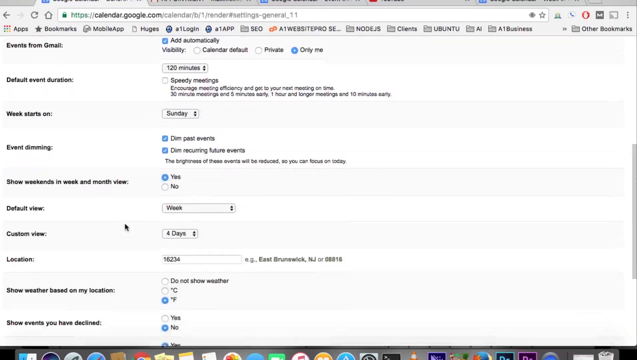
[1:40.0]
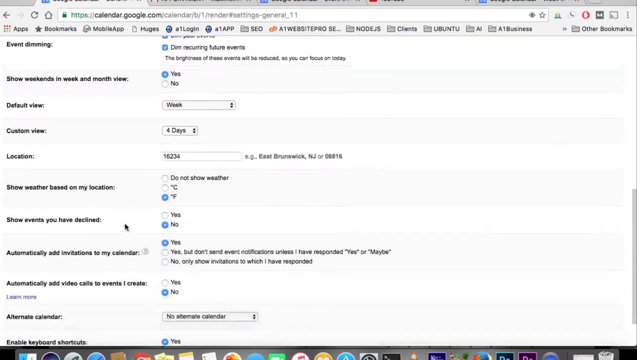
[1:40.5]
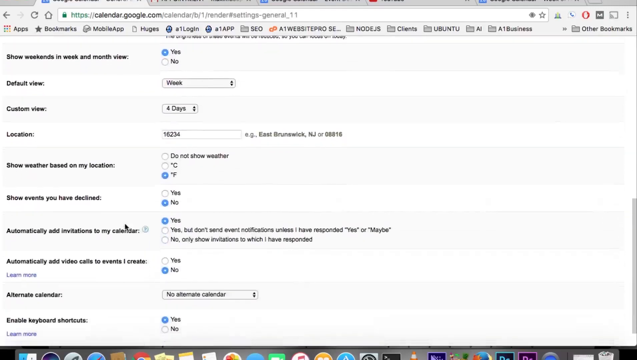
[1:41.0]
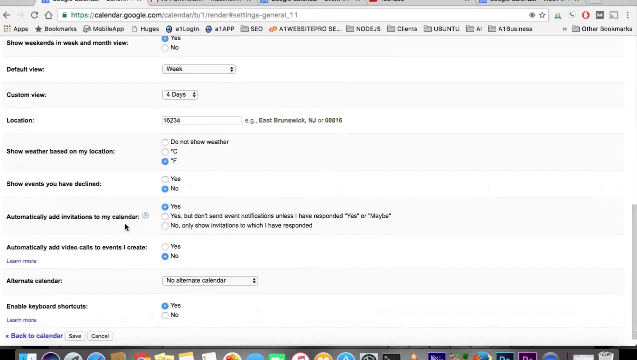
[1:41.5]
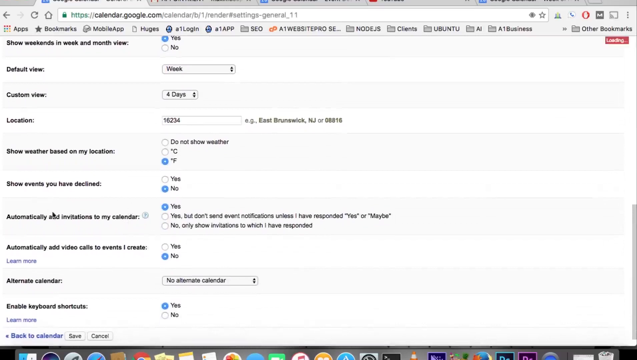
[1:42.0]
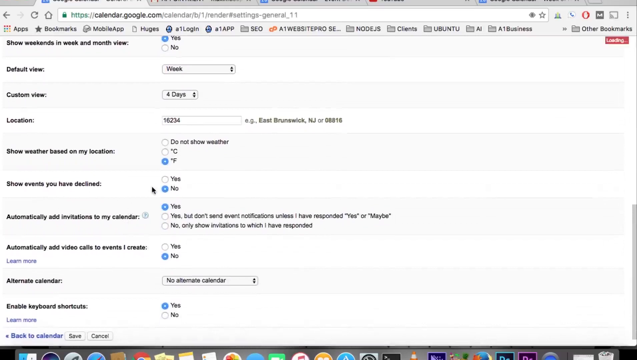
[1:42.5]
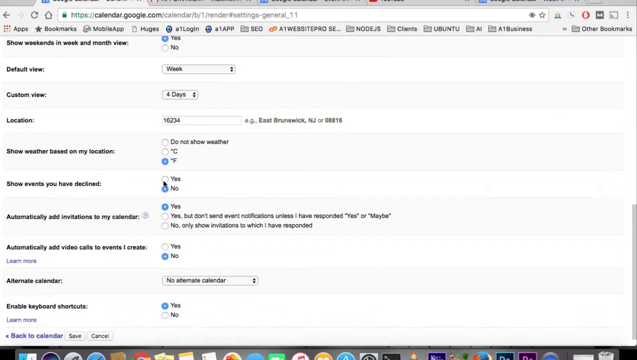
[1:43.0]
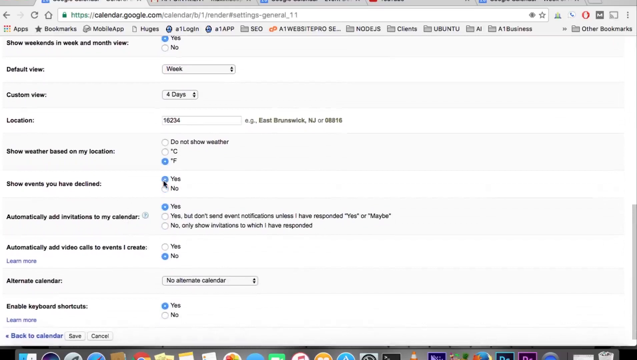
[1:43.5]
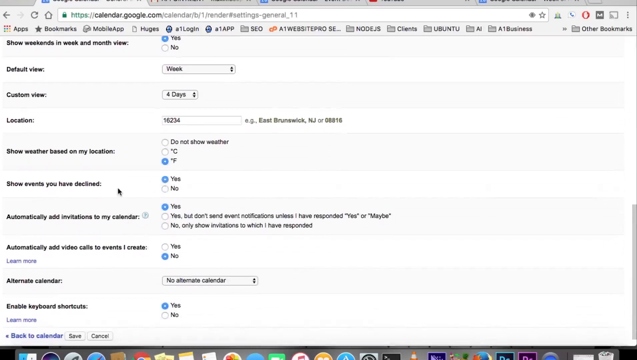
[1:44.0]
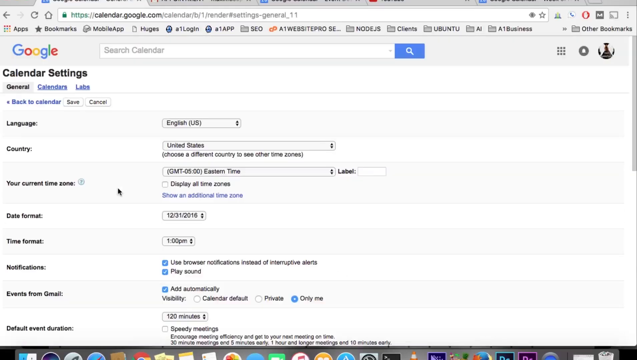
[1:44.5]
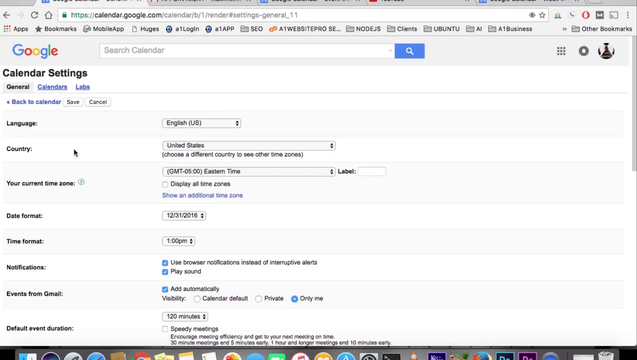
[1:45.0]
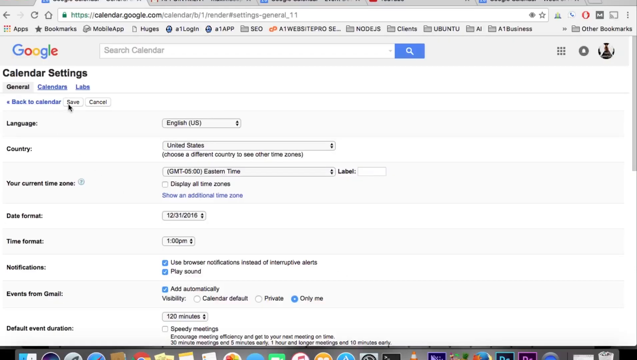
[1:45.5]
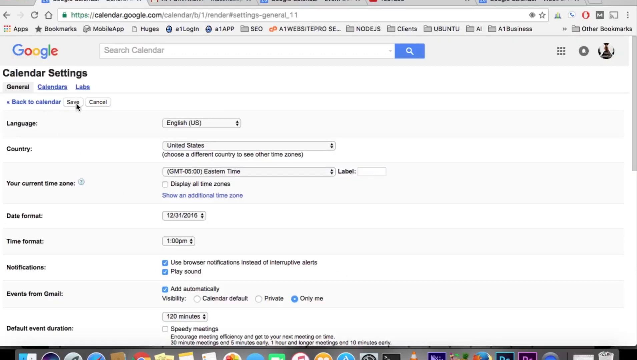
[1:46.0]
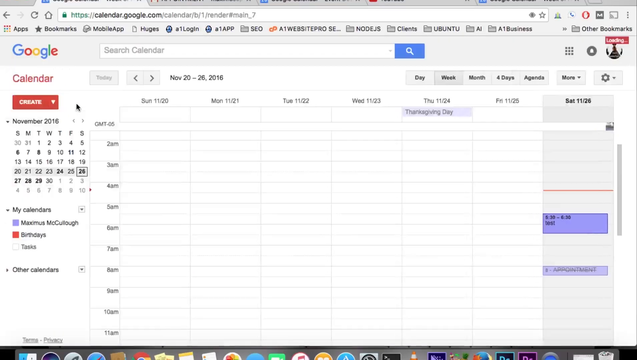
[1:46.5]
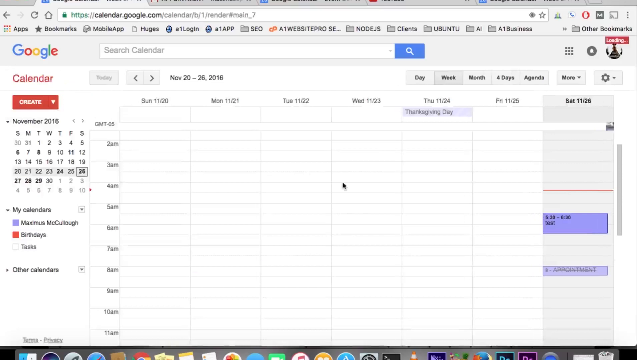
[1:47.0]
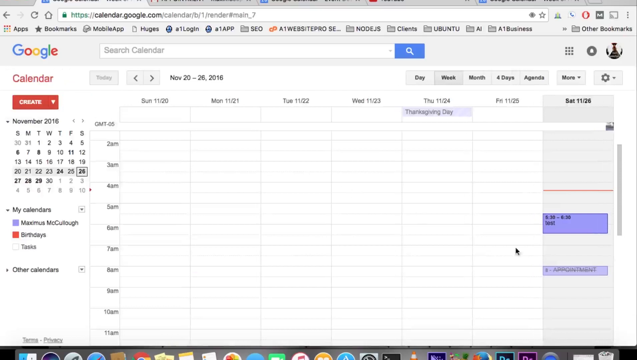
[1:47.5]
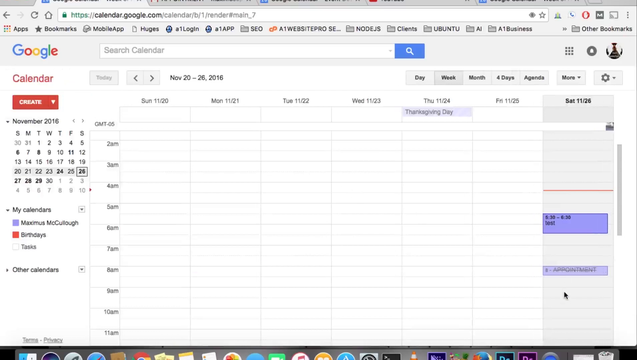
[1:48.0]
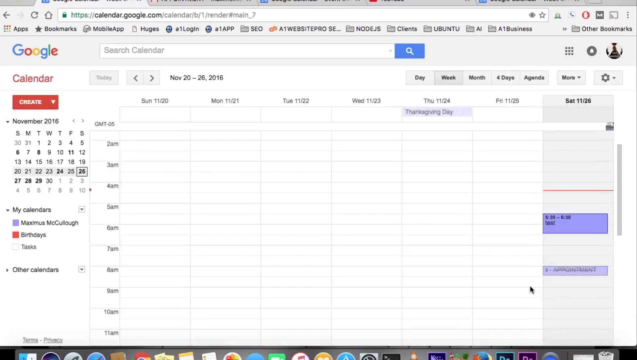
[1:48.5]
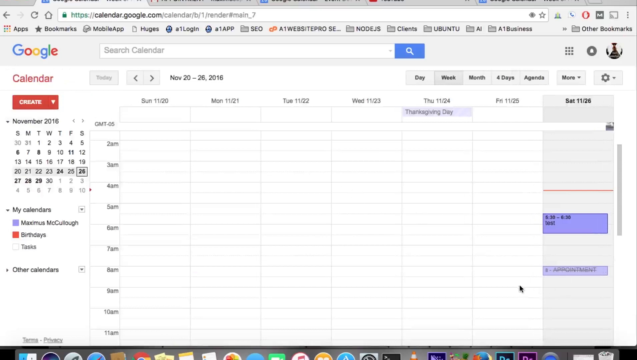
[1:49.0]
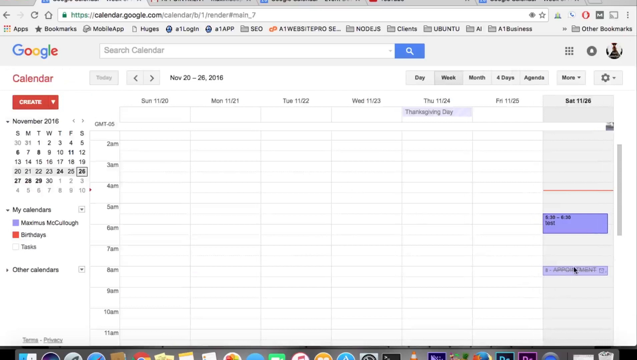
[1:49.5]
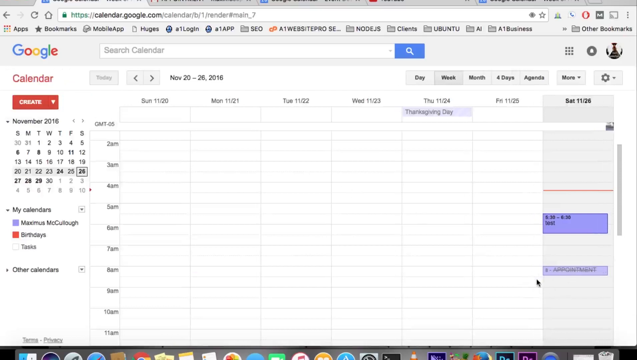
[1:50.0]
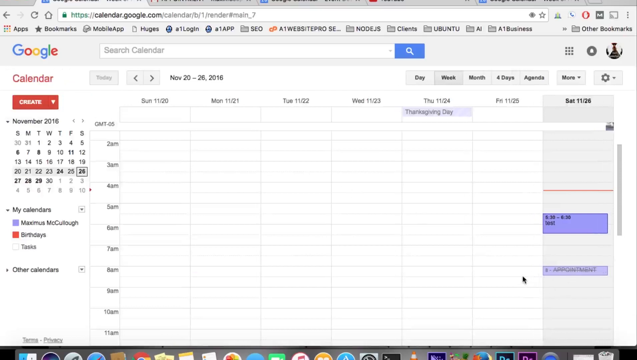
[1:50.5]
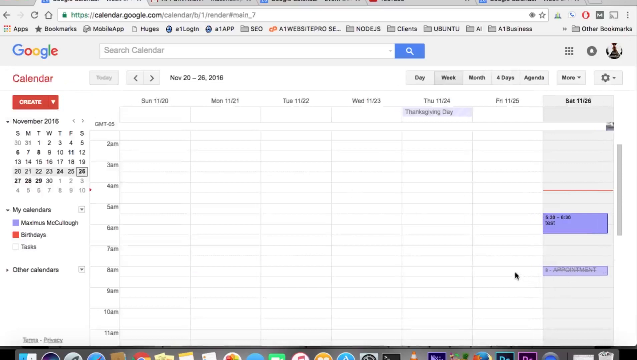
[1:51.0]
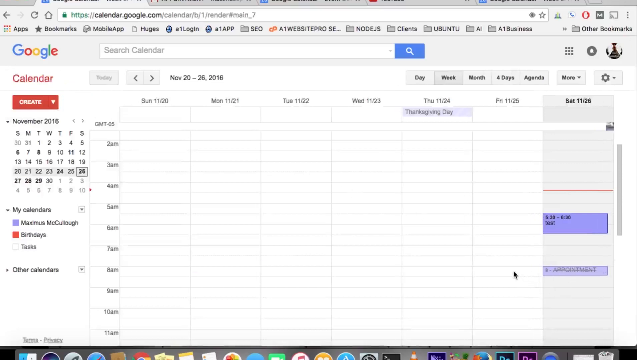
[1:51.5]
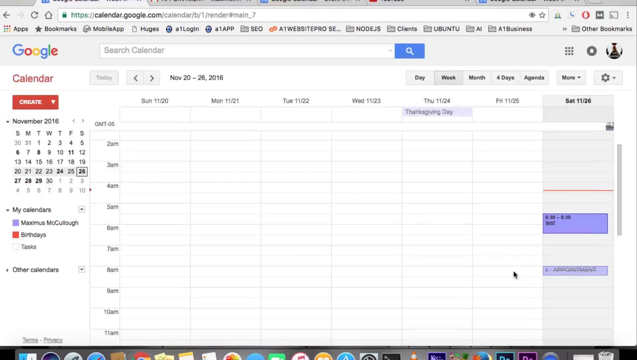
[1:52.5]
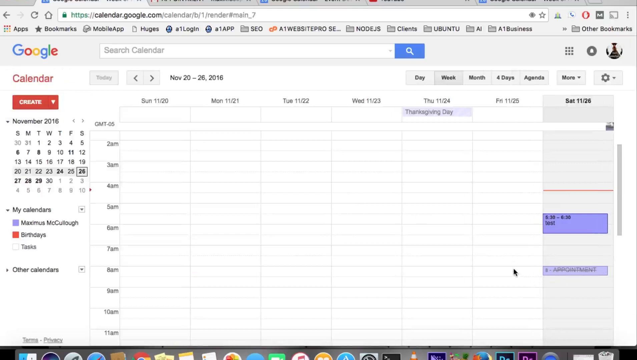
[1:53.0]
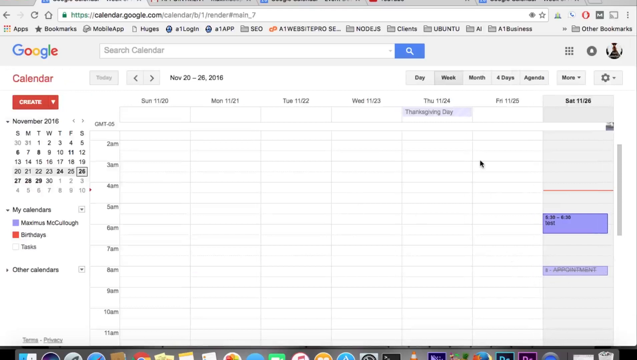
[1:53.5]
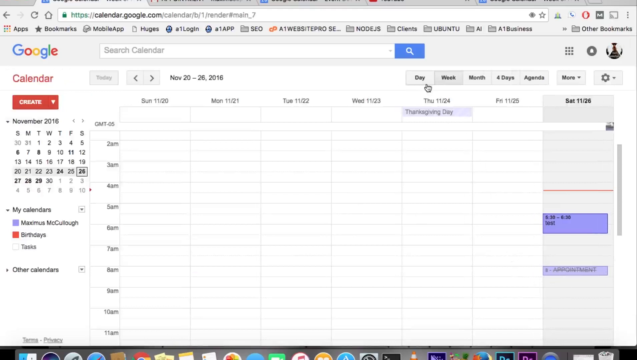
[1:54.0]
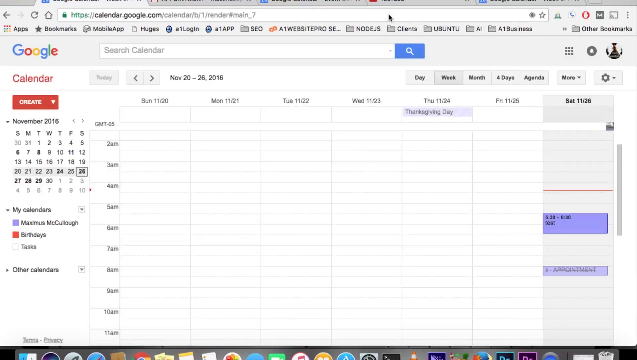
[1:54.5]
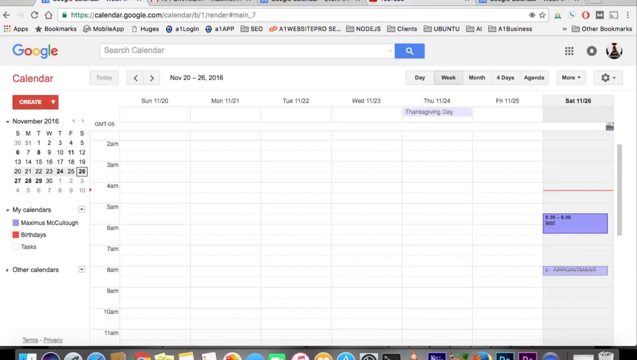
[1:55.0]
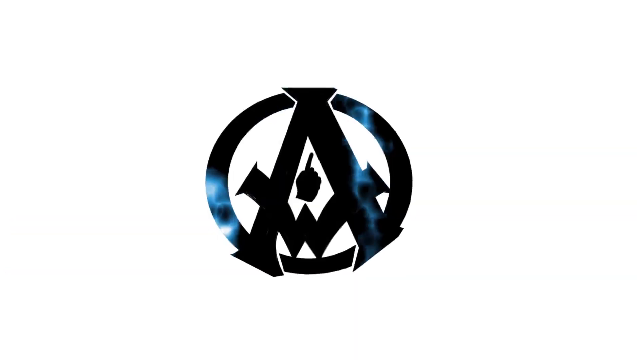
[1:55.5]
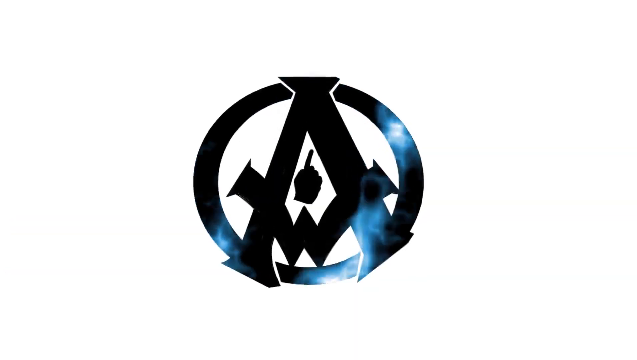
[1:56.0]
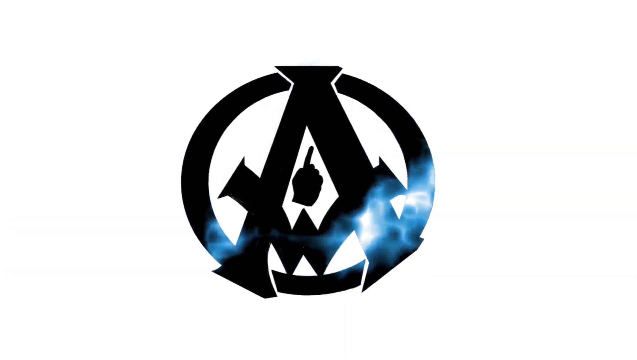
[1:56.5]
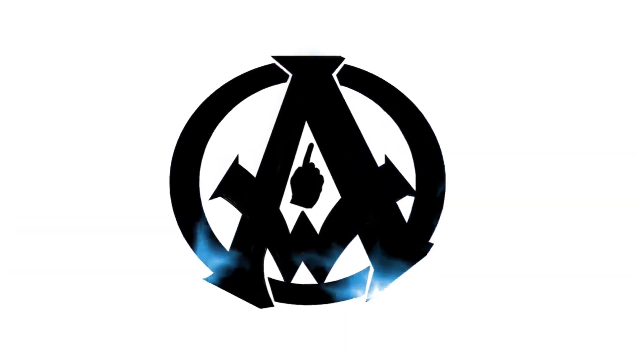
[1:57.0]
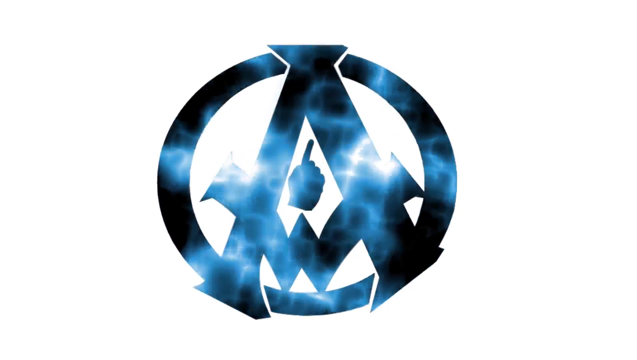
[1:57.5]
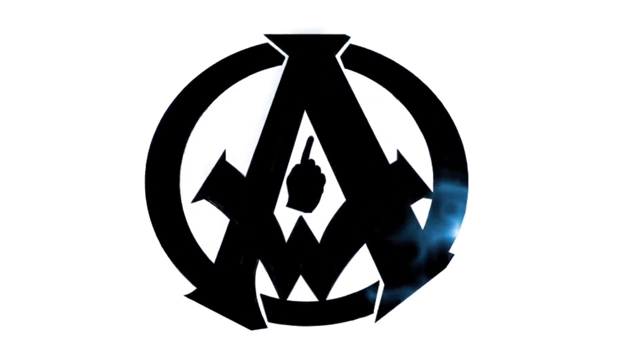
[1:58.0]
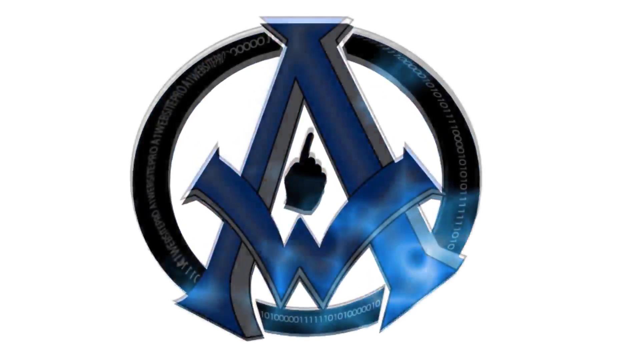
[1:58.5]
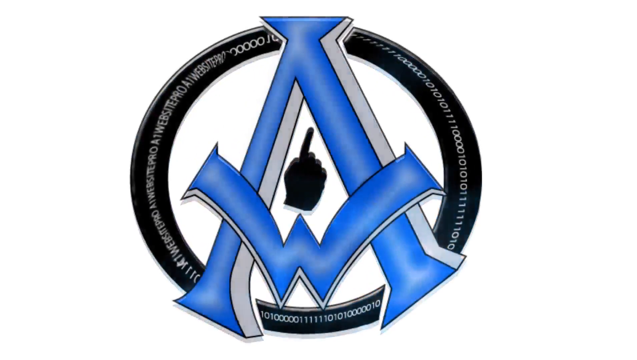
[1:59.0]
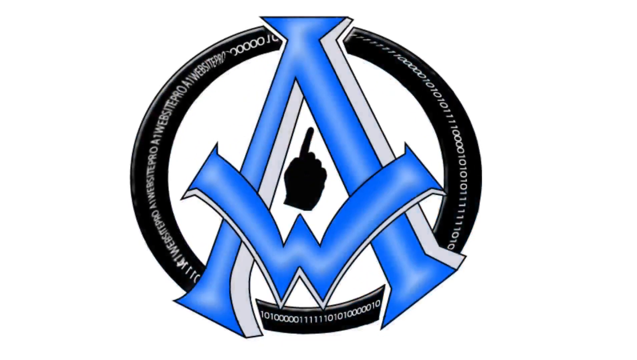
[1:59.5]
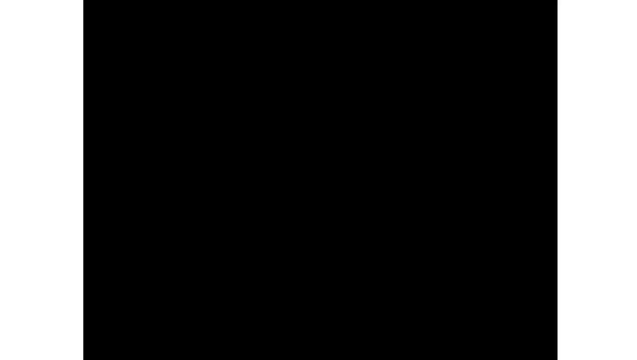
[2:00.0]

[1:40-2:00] The Google Calendar tab is still active, and the page has moved slightly so that items at the bottom that were not visible before are now displayed. The mouse remains on the left-hand column containing the row titles, and is positioned over the row titled "automatically add invitations to my calendar". To the right of it are the choices "yes", which is active; "yes, but don't send out notifications unless I have reported yes or maybe", which is not active; and "no", which is also not active and also says "only show invitations to which I have responded". No change is made to that row; instead the mouse moves up to the row above it, titled "show events that you have declined", whose choices are "yes" or "no". "No" is active until the mouse changes the selection.